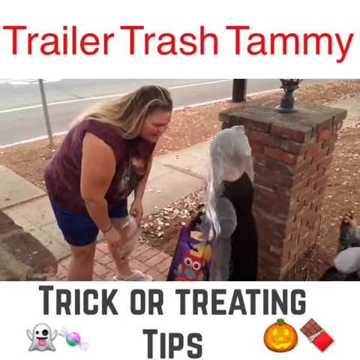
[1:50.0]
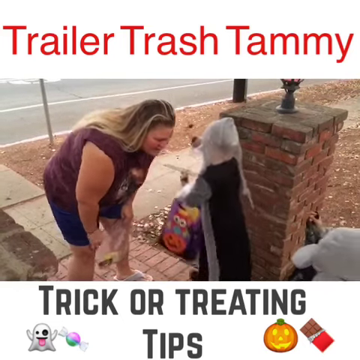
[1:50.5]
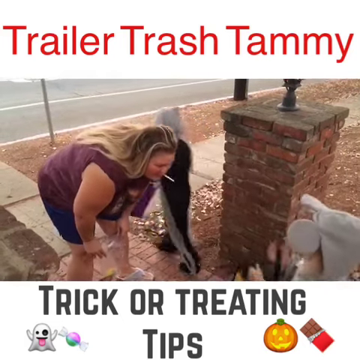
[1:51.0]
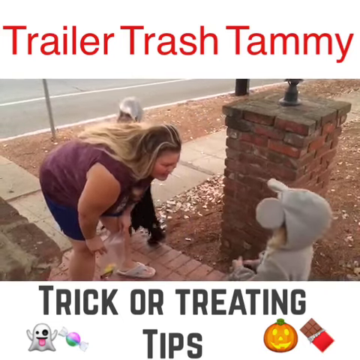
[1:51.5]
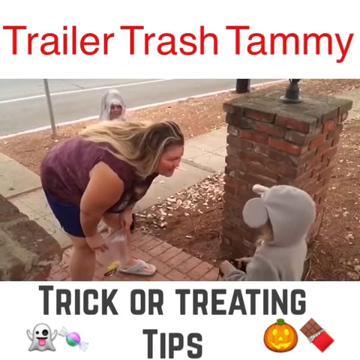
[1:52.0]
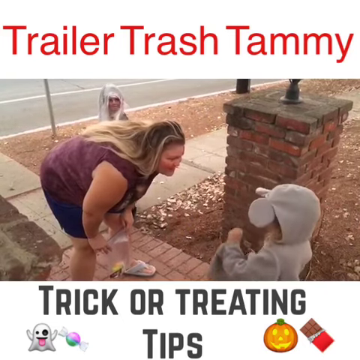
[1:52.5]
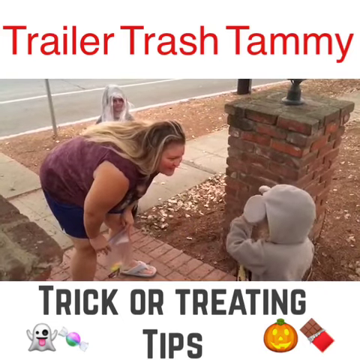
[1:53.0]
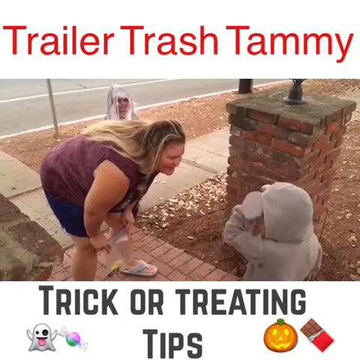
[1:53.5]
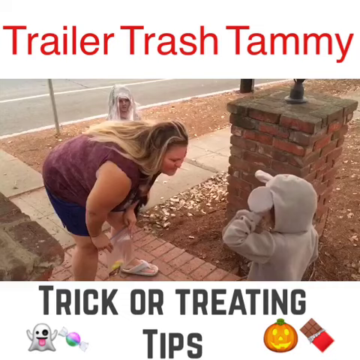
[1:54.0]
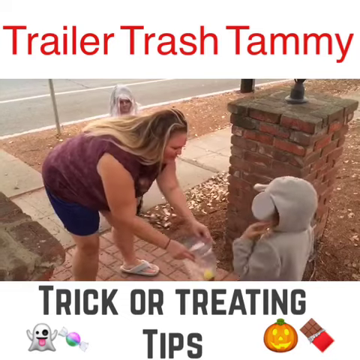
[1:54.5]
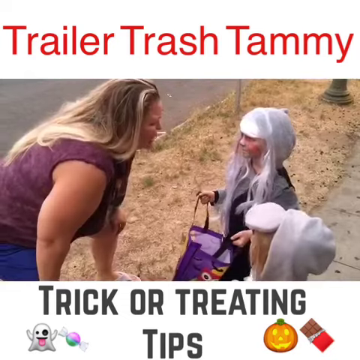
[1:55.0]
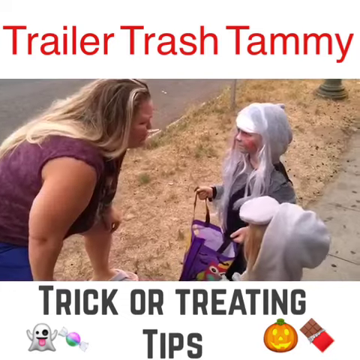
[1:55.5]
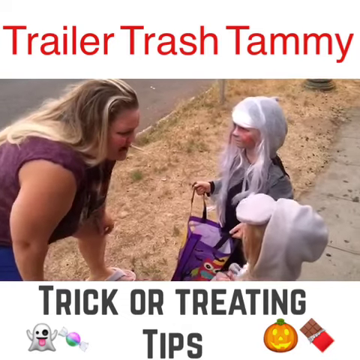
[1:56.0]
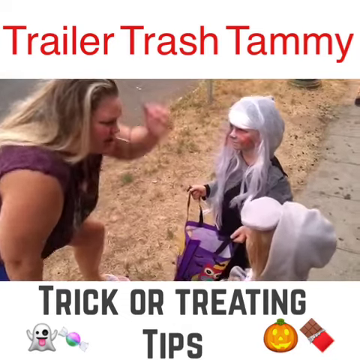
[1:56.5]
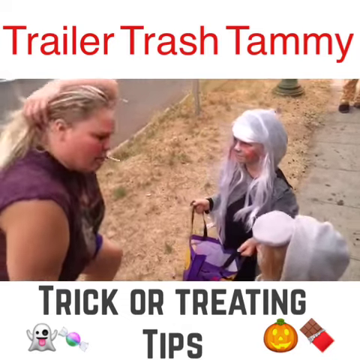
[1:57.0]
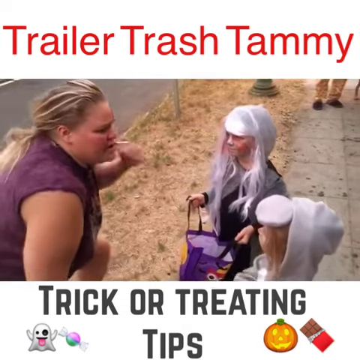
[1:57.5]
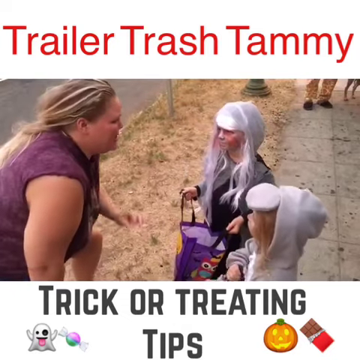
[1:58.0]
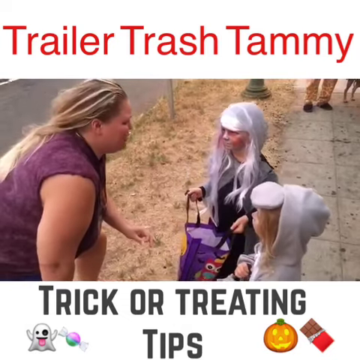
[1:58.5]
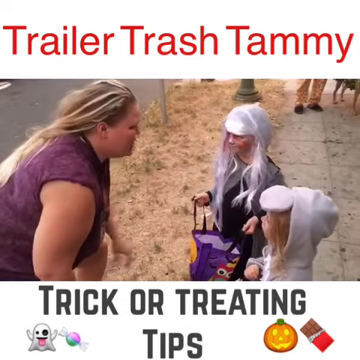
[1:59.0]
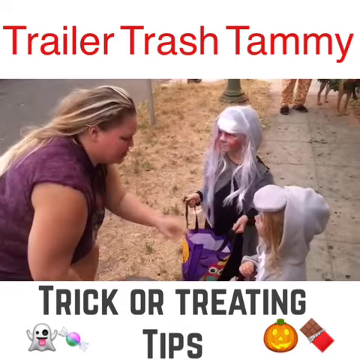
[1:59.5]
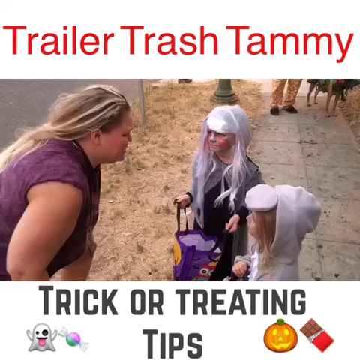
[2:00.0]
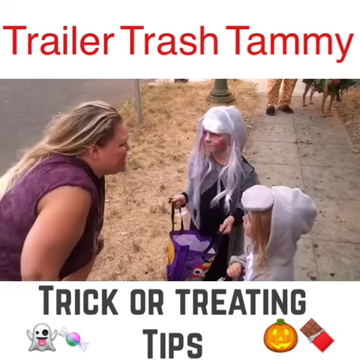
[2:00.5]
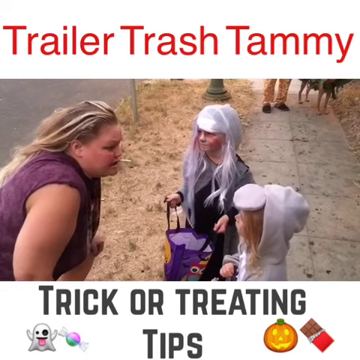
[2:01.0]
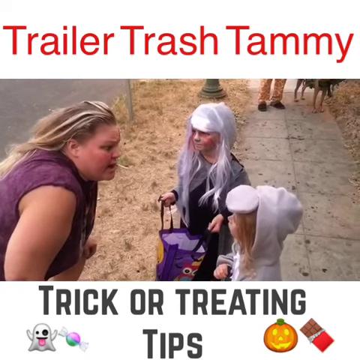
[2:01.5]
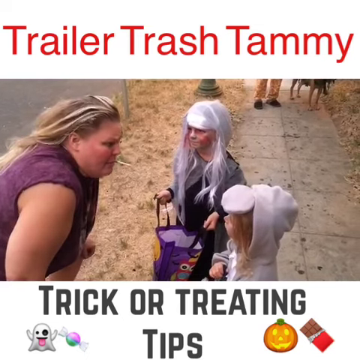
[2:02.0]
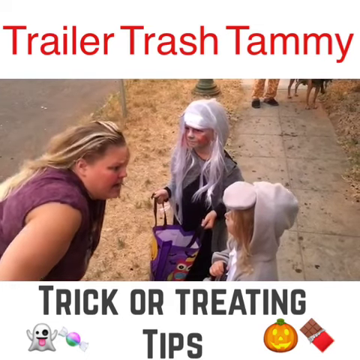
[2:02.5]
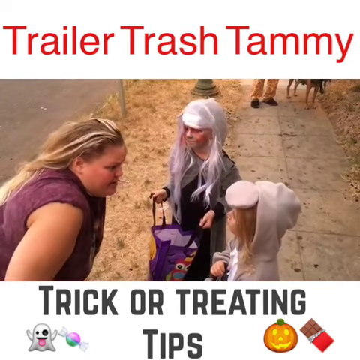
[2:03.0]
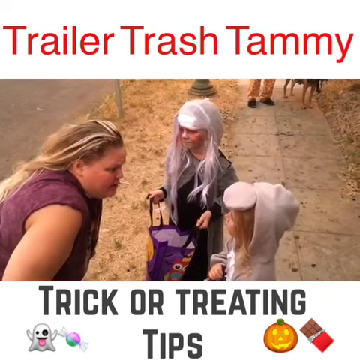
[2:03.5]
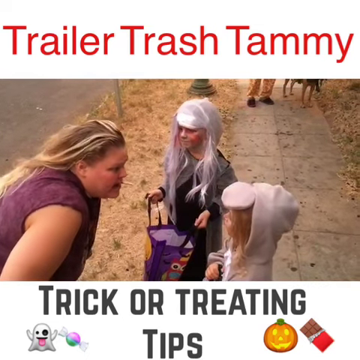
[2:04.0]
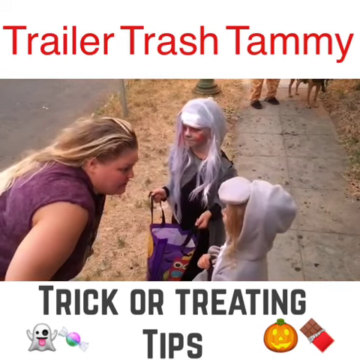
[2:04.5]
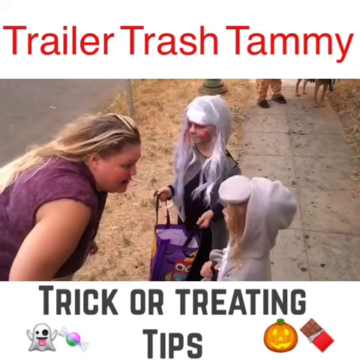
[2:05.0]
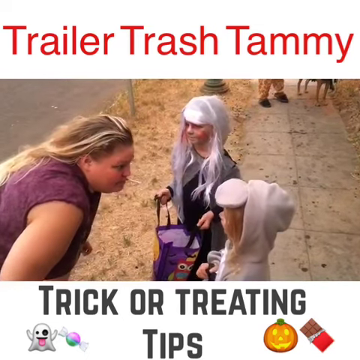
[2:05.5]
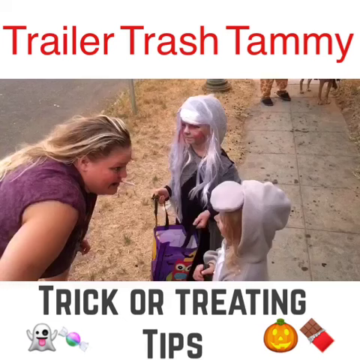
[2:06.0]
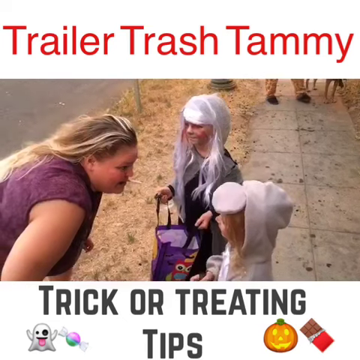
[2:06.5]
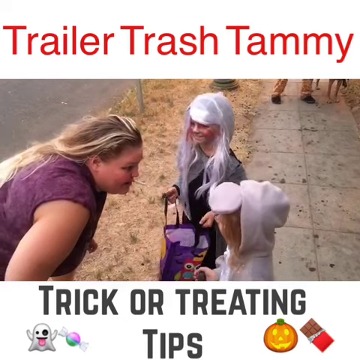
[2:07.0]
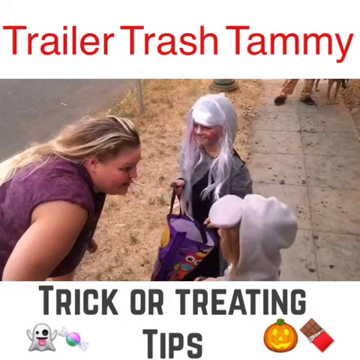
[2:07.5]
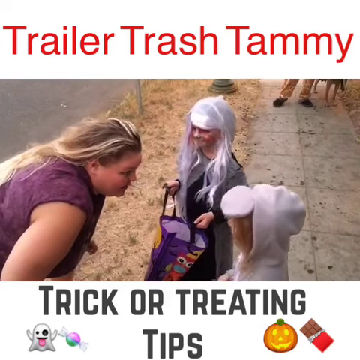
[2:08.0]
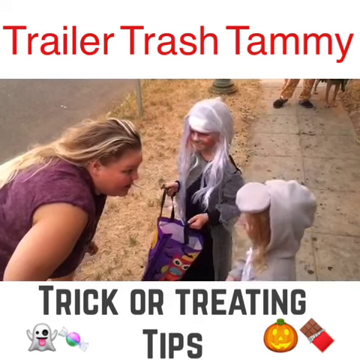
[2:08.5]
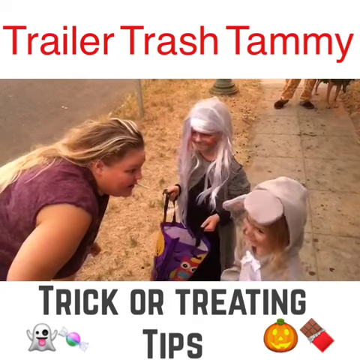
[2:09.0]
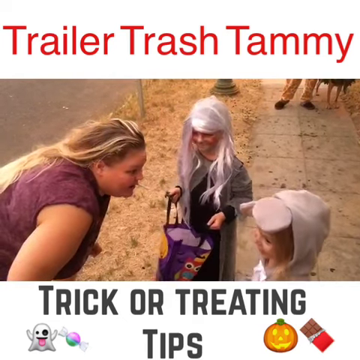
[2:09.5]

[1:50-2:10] Trailer Trash Tammy and the children reach the next home they plan to trick-or-treat at. Tammy is again bent over, talking to the little ghoul, who holds his trick-or-treat bag; it has black candles and is various colors of purple, red, and yellow. Tammy looks like she is giving the little ghoul words of encouragement to walk up to the homeowner's house and trick-or-treat. Next, they walk away, and the little mouse walks away; she has blonde hair and wears a gray mouse costume with a long mouse tail. Tammy bends over talking to the little girl in the mouse costume, still speaking with the unlit cigarette in her mouth.